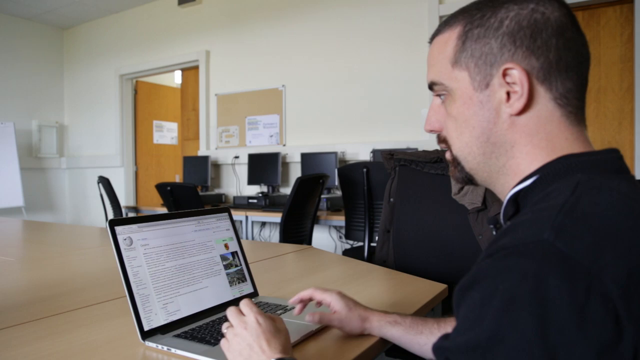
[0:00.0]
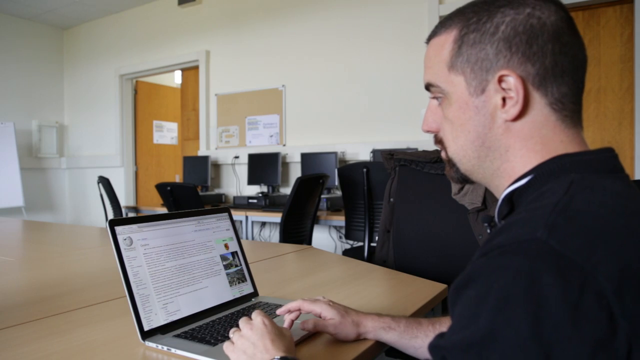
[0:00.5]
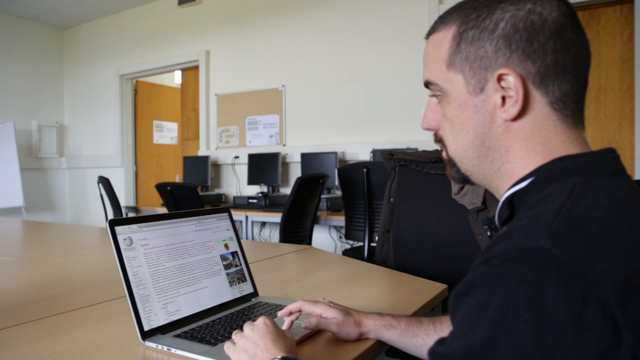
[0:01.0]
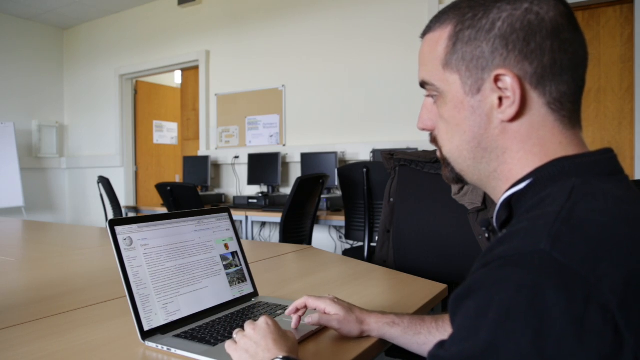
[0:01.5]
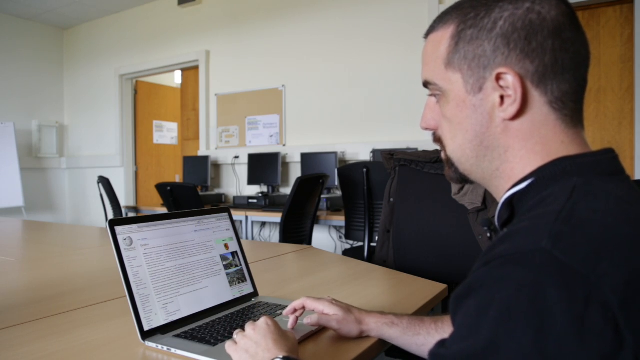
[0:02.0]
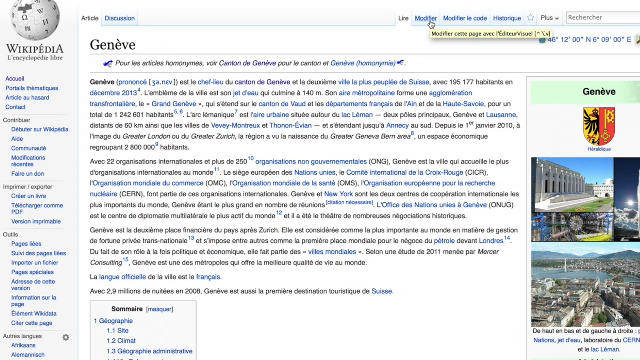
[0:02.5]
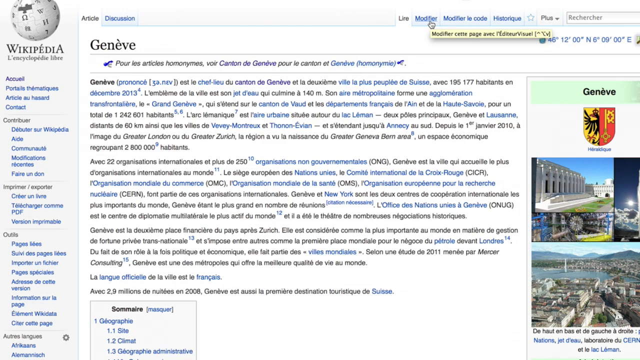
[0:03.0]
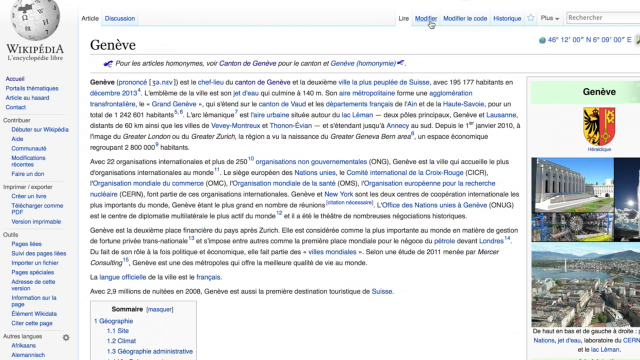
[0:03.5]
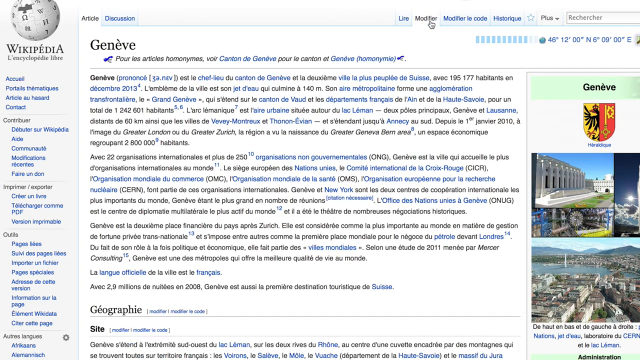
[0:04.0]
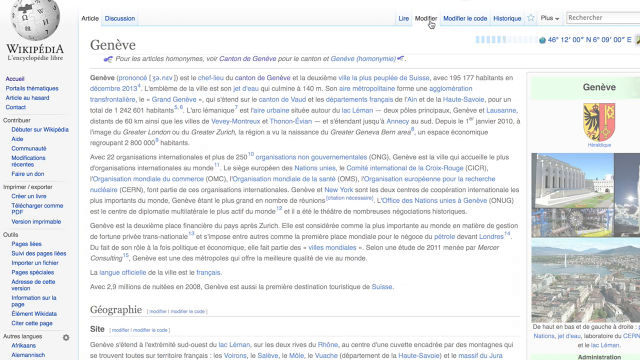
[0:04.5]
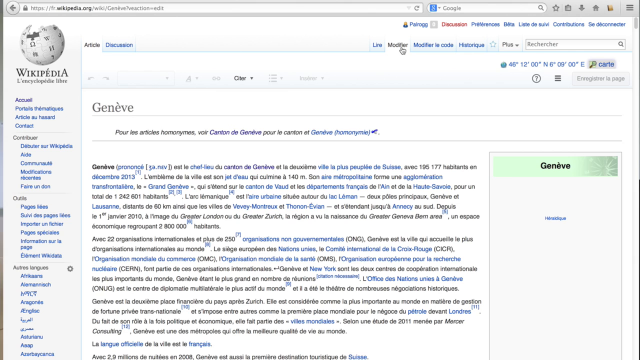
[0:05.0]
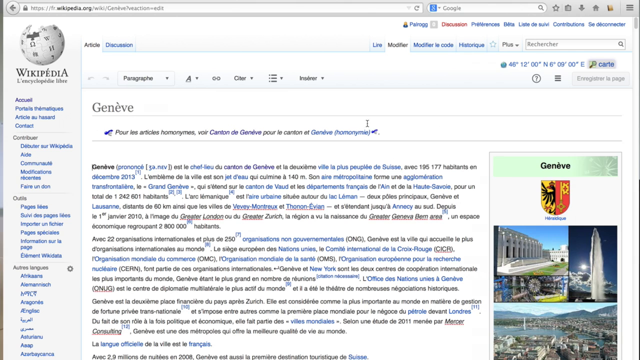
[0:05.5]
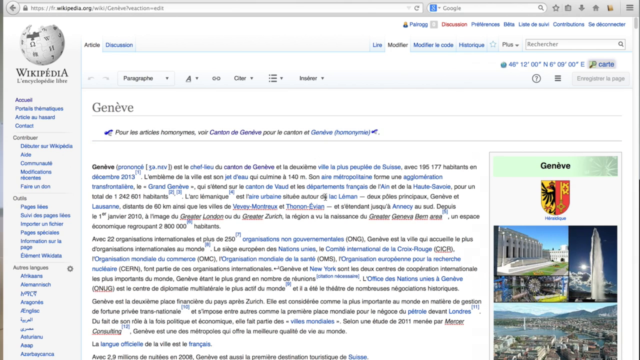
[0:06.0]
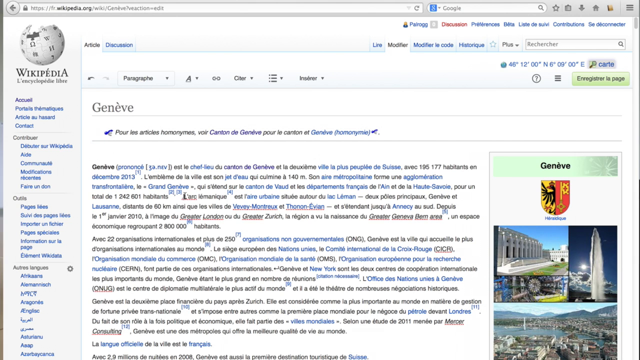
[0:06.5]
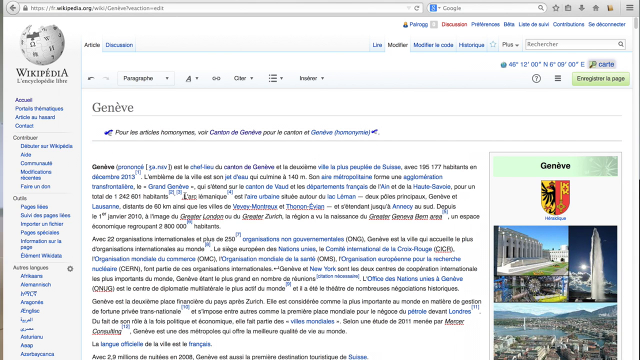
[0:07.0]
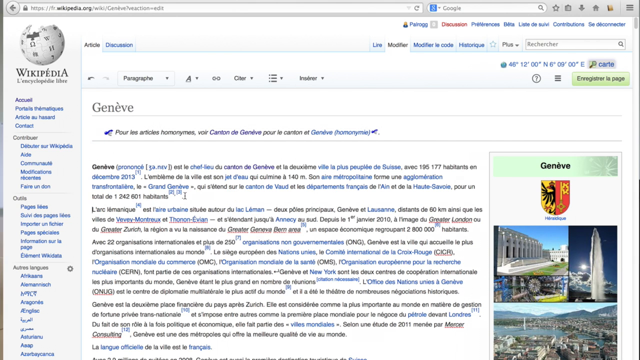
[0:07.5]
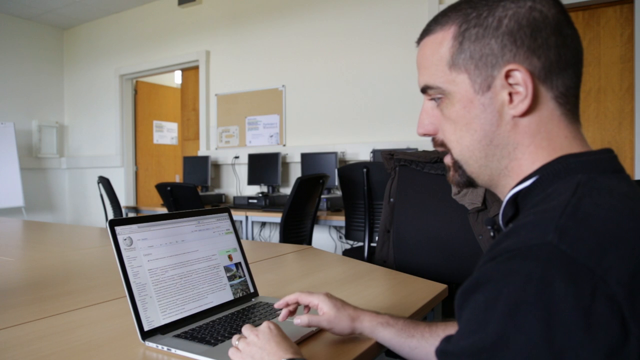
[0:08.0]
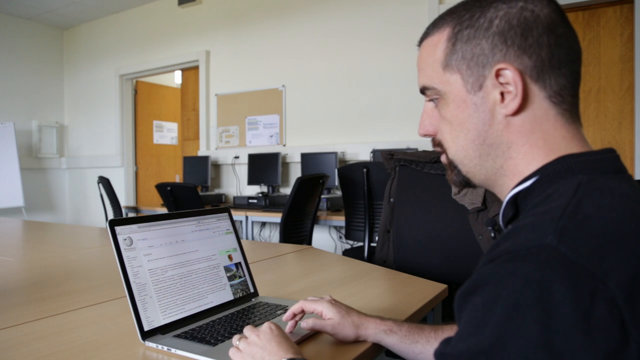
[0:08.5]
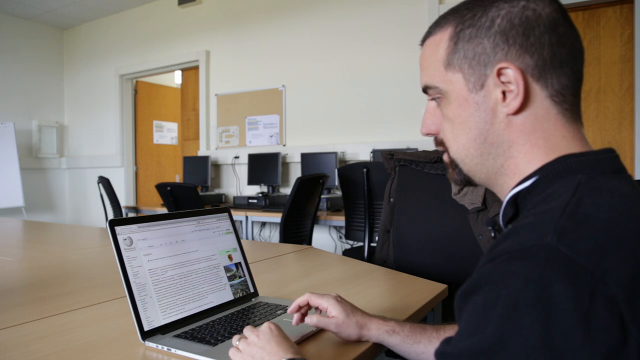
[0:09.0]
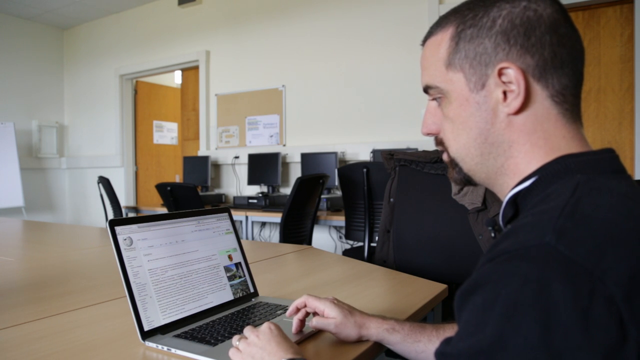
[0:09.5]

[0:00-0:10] A white man with brown hair and a brown goatee is on the right side of the screen. He wears a black polo shirt and sits at a wooden desk in a room painted white. Along the wall there appear to be four computers, with desk chairs along the wall next to those computers, and there is also a cork board on the wall. The man has his hands above the keyboard of a computer, which is on a Wikipedia page. The view then zooms in on the Wikipedia page, which is possibly for Geneva and is in a language other than English. It reads G-E-N-E-V-E, with an accent above the middle E. By the name there is a flag, and his mouse cursor moves around the screen as he clicks and edits some text.